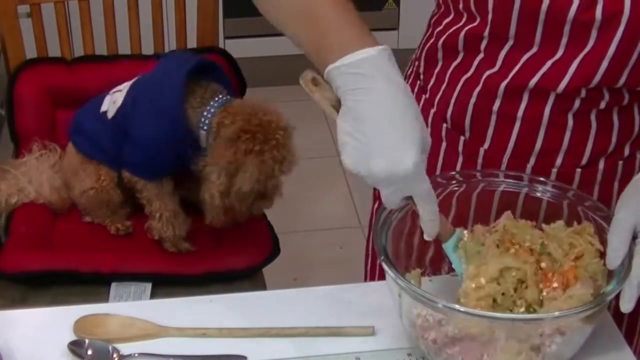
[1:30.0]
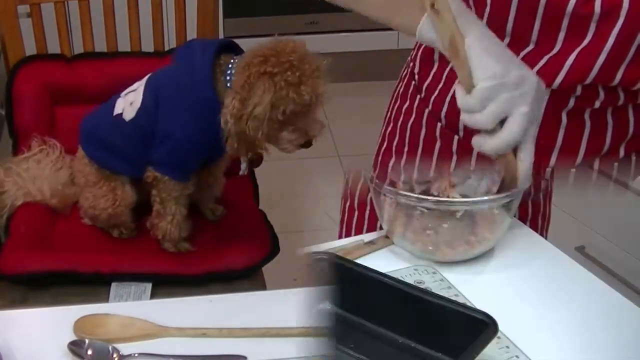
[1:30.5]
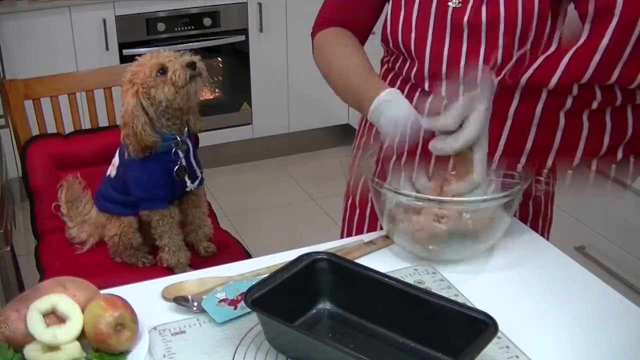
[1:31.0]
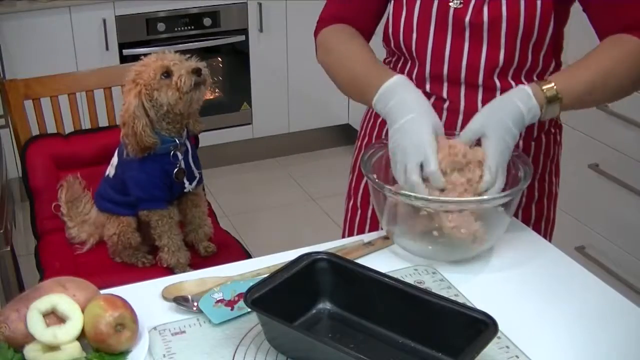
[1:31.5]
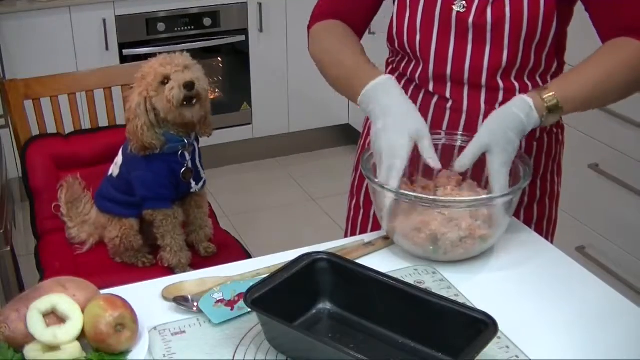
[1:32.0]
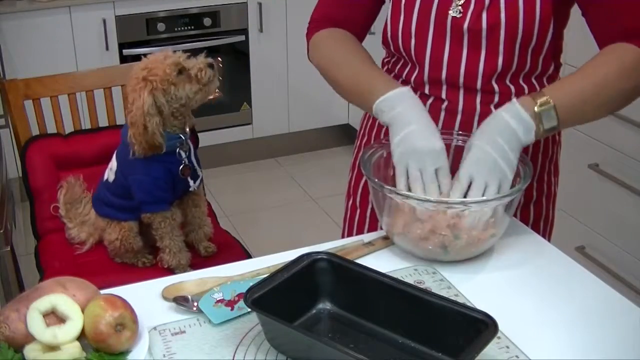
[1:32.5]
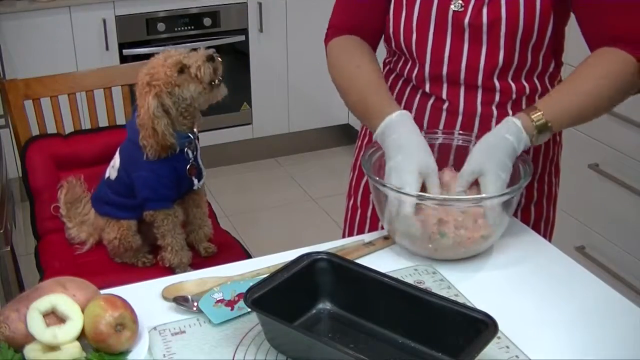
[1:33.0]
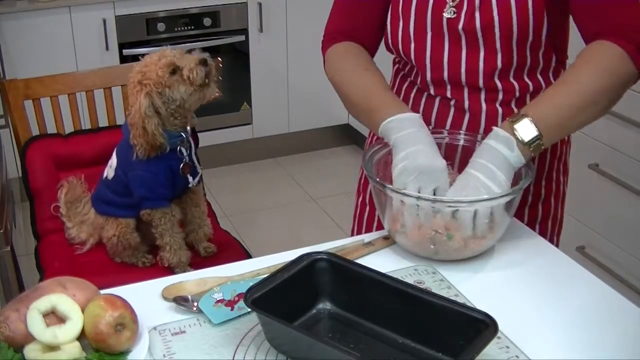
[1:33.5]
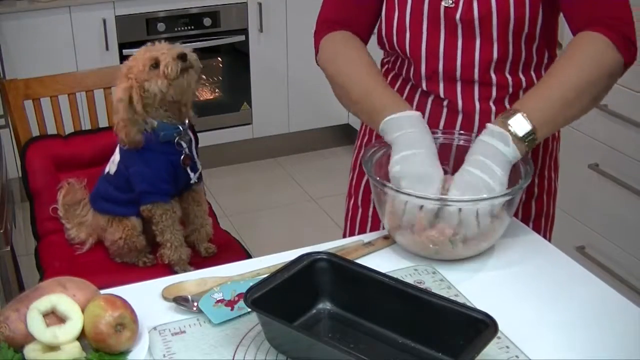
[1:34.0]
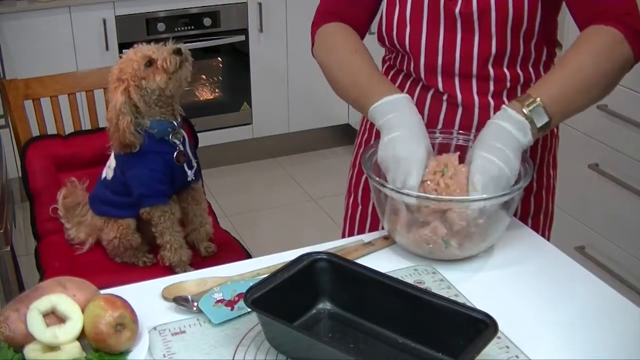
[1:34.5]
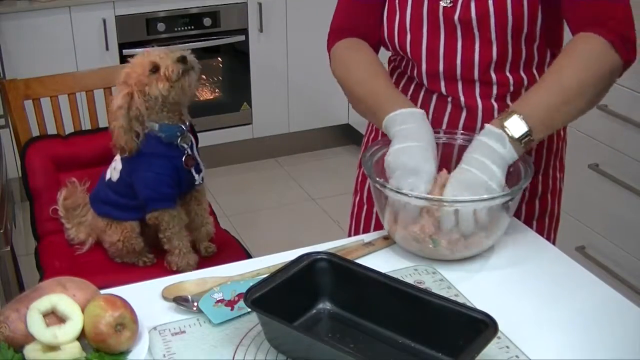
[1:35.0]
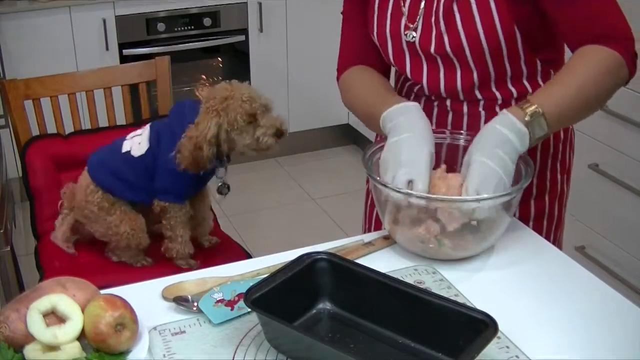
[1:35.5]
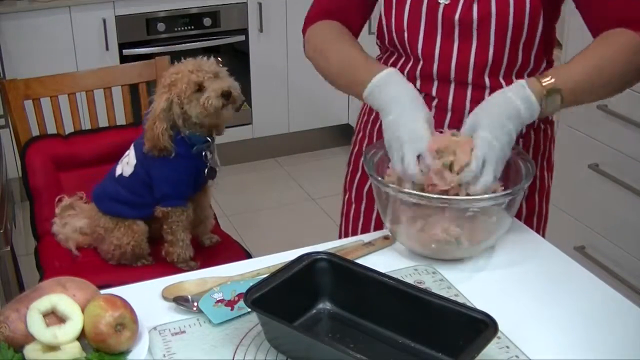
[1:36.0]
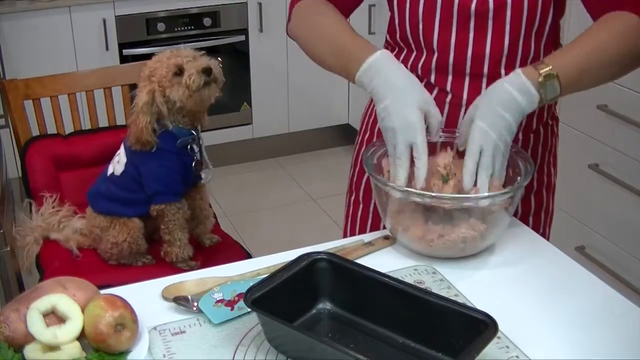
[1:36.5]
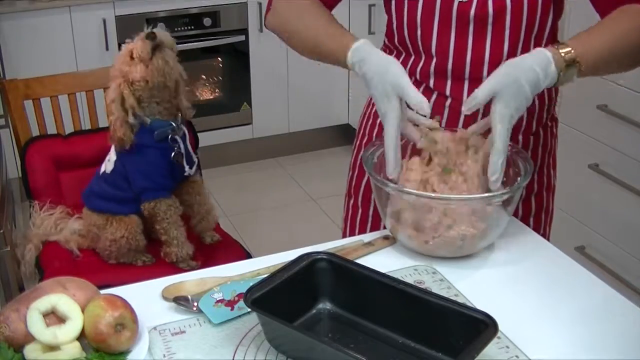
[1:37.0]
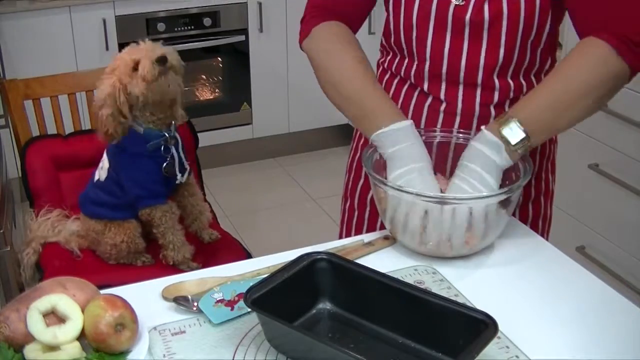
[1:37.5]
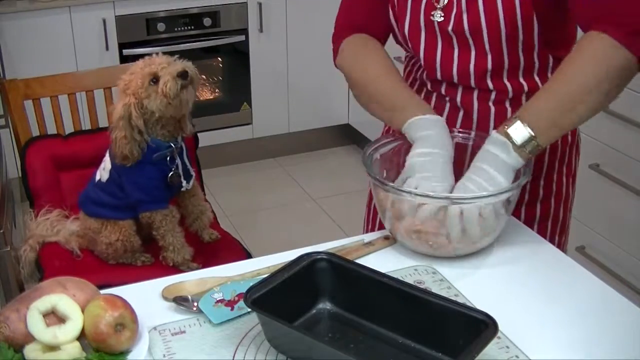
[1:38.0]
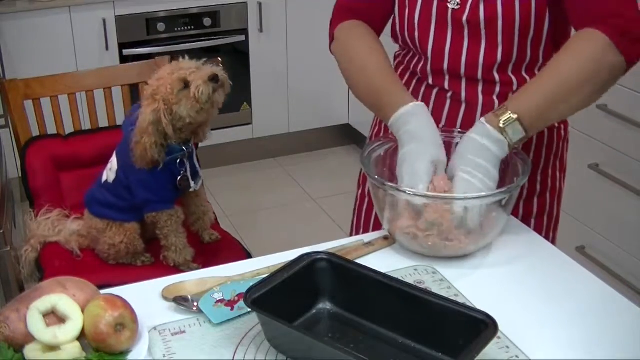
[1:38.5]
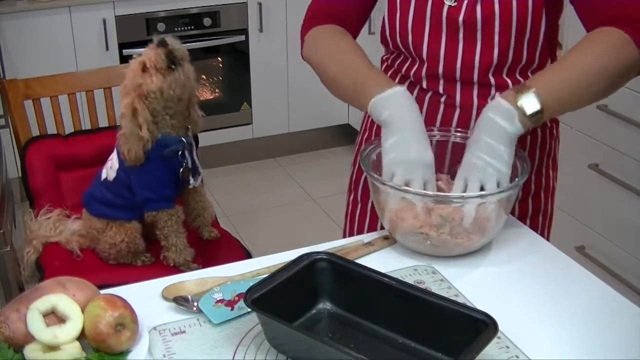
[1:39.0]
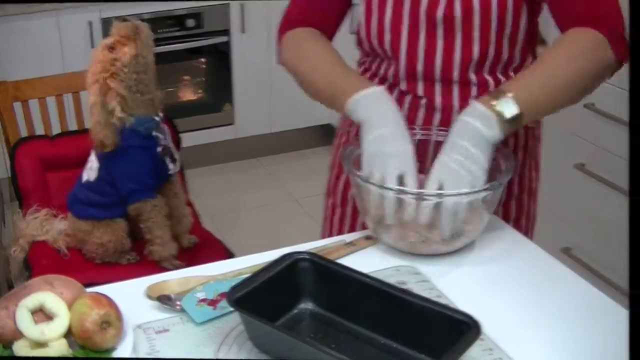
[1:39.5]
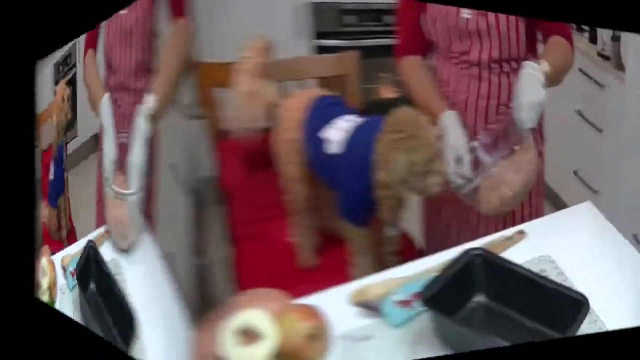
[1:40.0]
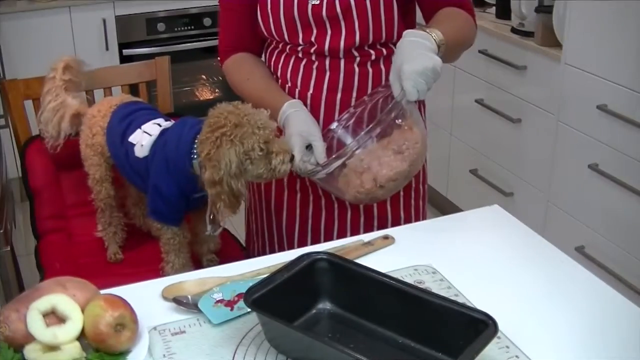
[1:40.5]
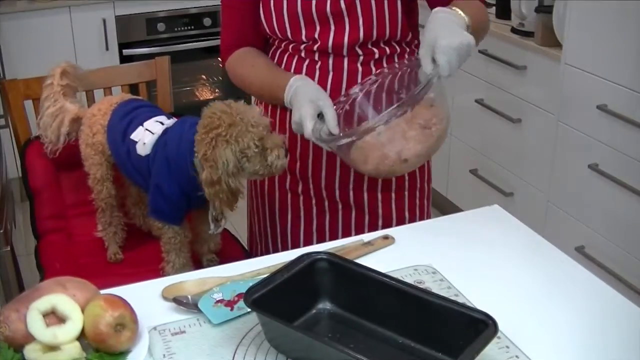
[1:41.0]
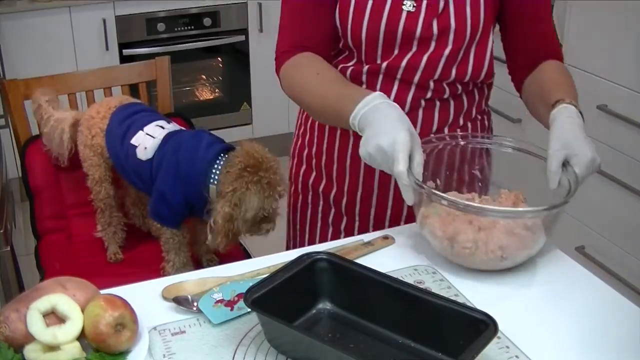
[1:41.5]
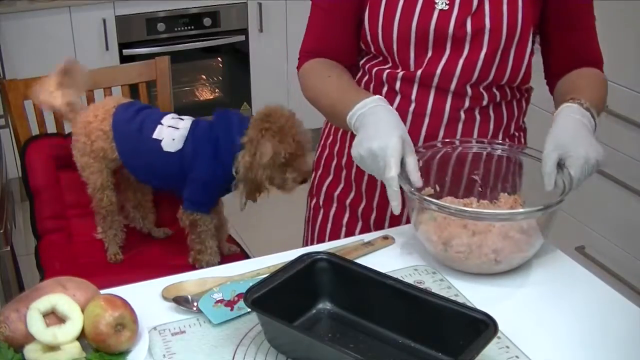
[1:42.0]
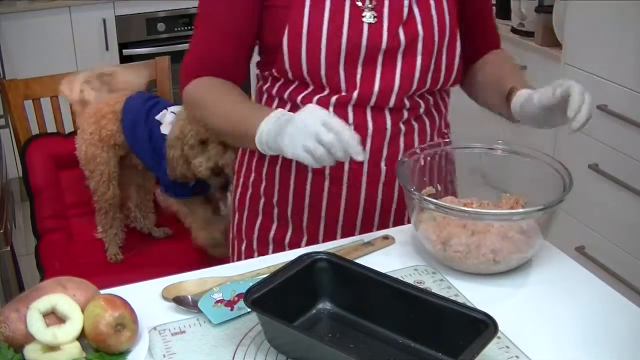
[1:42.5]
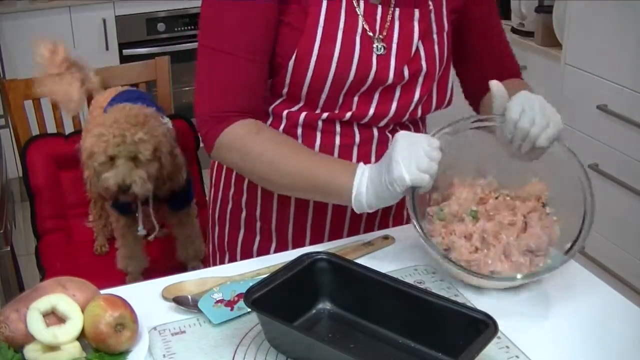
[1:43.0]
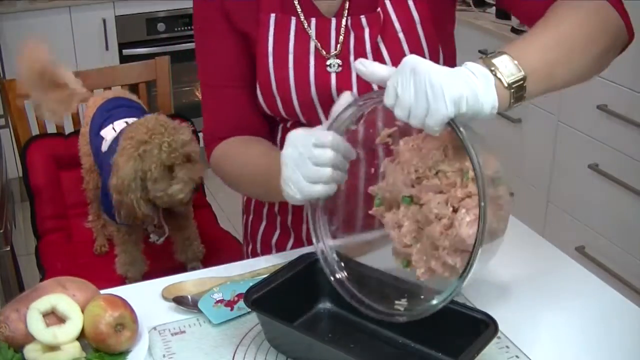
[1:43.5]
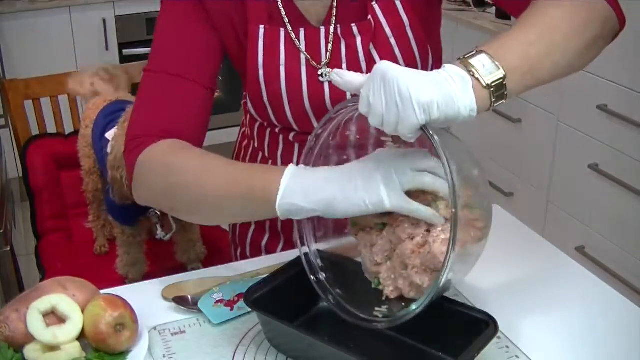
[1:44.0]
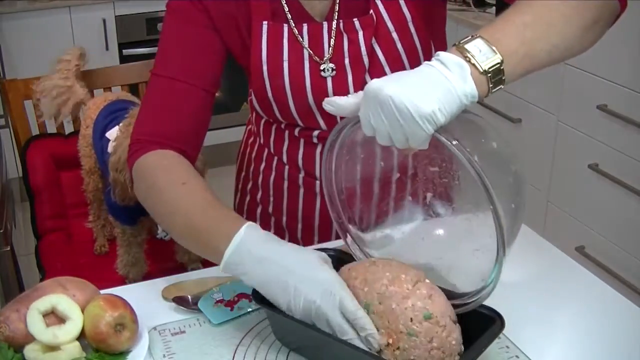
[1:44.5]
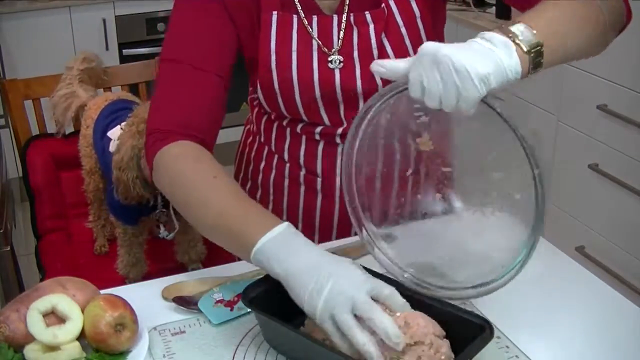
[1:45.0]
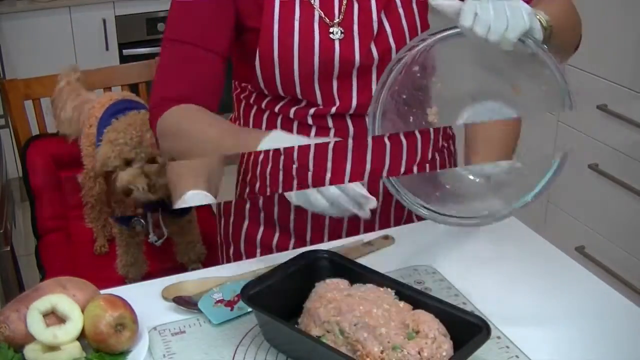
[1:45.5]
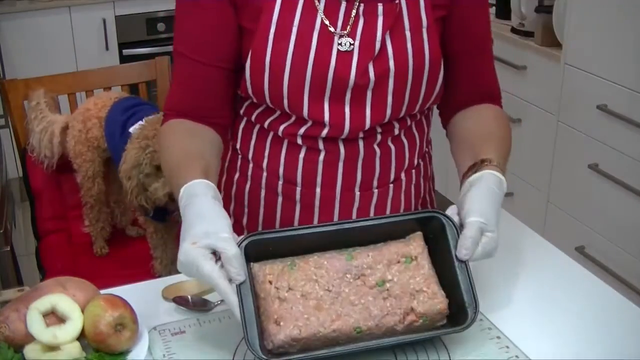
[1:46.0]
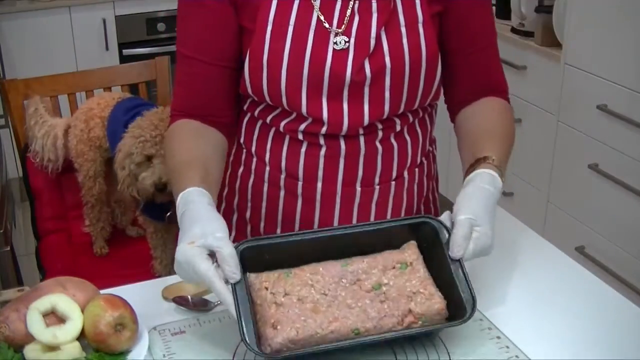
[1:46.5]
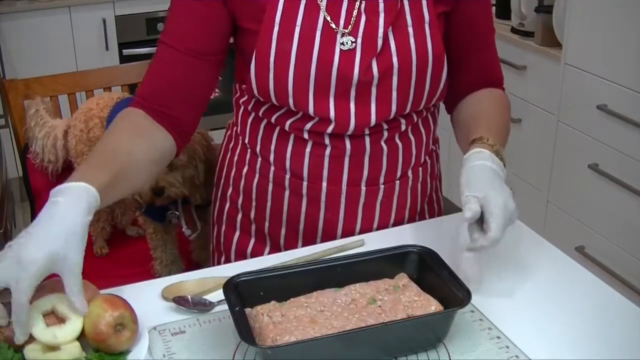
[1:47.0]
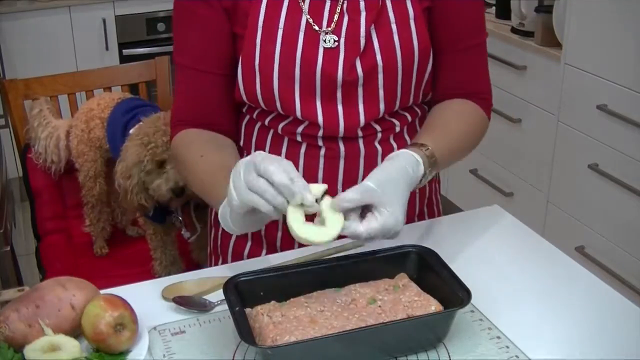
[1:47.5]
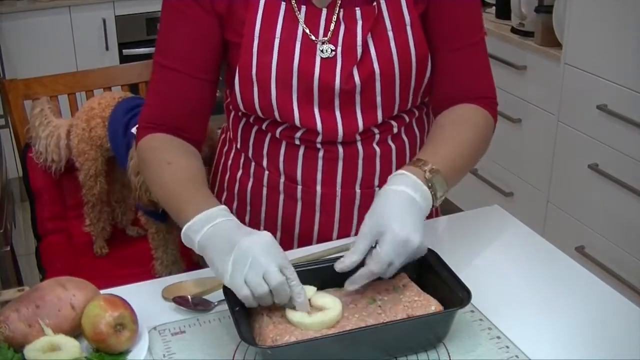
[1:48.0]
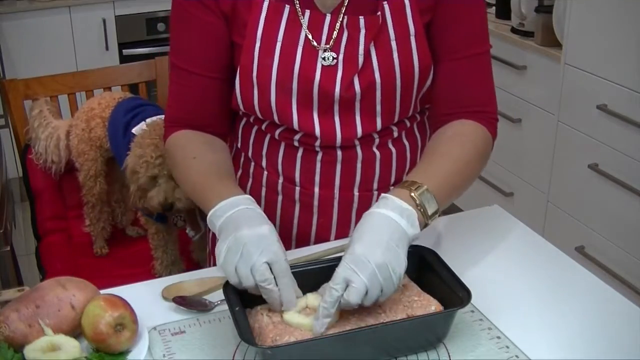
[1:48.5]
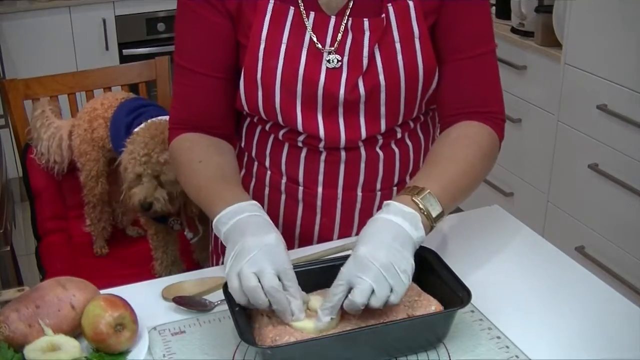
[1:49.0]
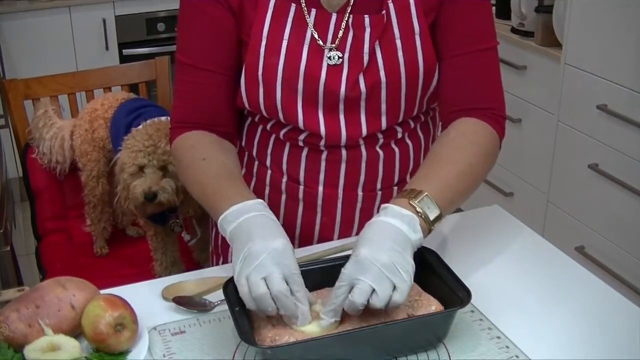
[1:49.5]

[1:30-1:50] A brown dog in a blue sweater with white writing on it sits on a red cushion placed on a brown chair, next to a lady in white plastic gloves and a red apron with white lines down it. She appears to be using a wooden spoon to mix several ingredients in a clear glass bowl on a white kitchen table. The view switches to a different angle showing an oven that is on in the background, with the lady still mixing in the foreground. The setting appears to be a kitchen with white tiles on the floor, and on the white table is what appears to be some sort of black pan, some apples and some pineapple slices. The lady handles the ingredients in the bowl with her hands and sort of kneads them together while the dog, looking like he is barking, barks continuously. At a different angle, the lady shows the packed-together mixture to the dog, then transfers it from the glass bowl into the black pan, flattens it down and puts some pineapple on top.